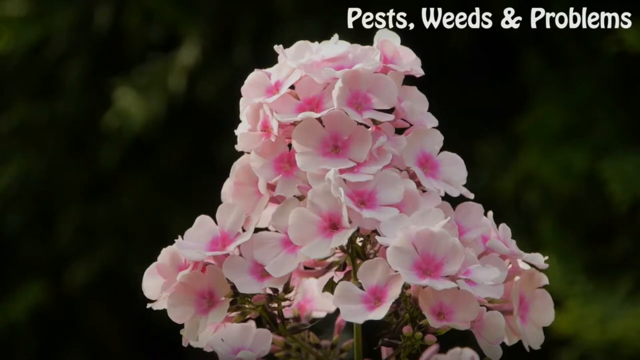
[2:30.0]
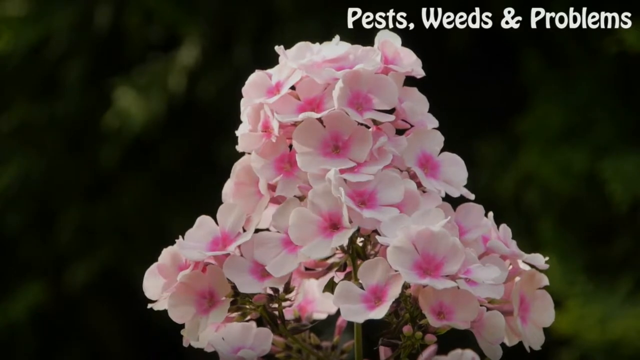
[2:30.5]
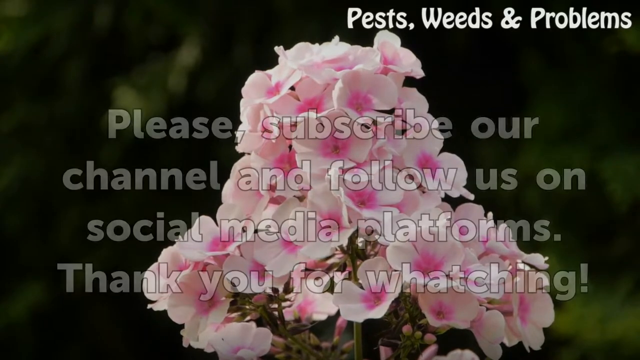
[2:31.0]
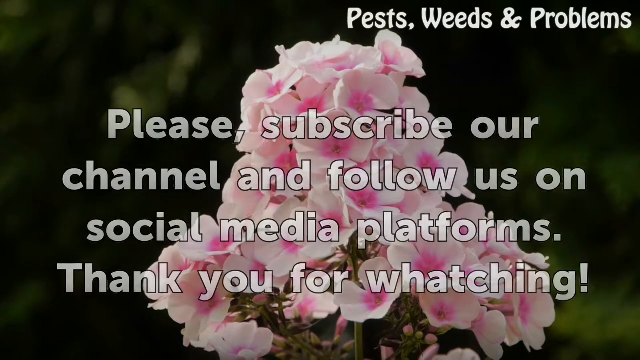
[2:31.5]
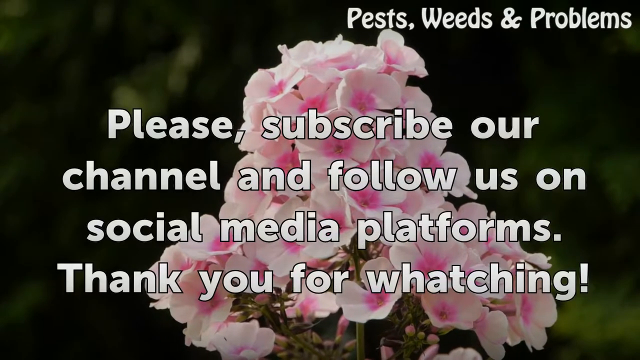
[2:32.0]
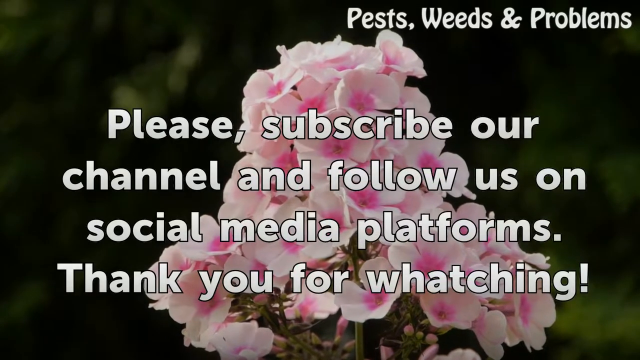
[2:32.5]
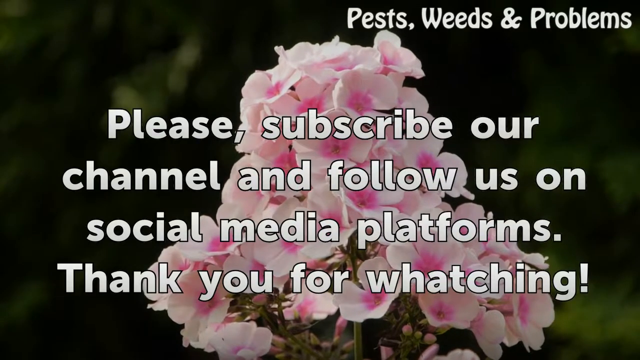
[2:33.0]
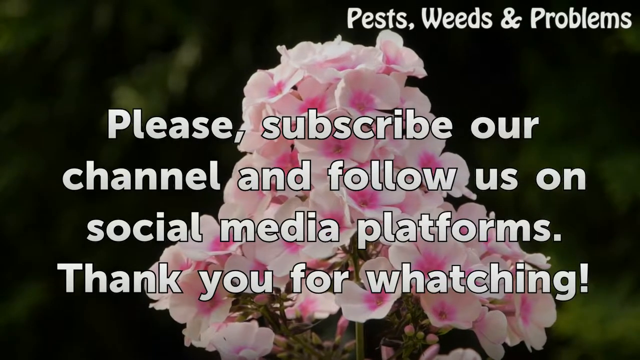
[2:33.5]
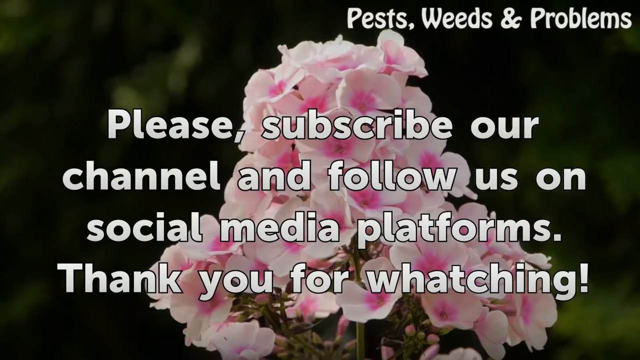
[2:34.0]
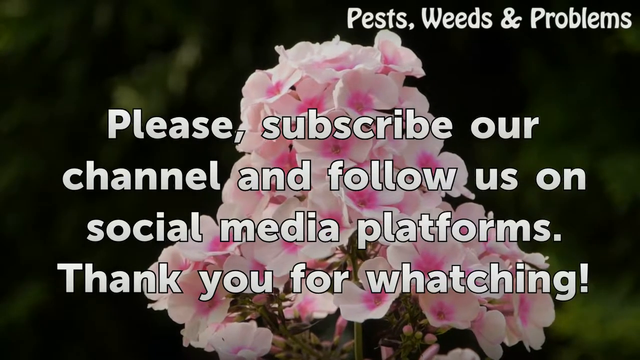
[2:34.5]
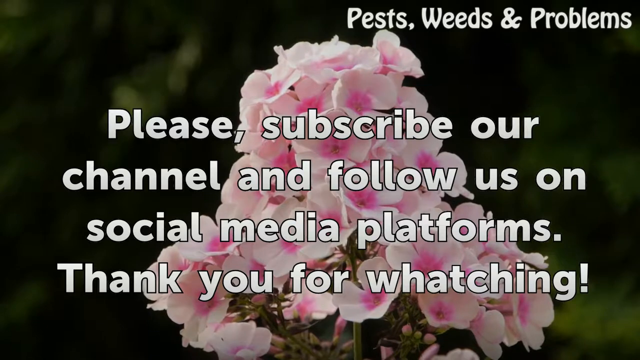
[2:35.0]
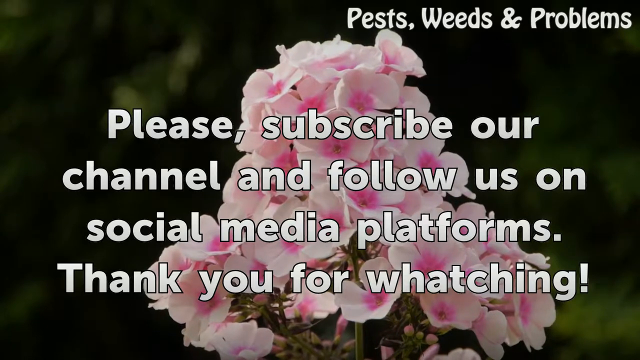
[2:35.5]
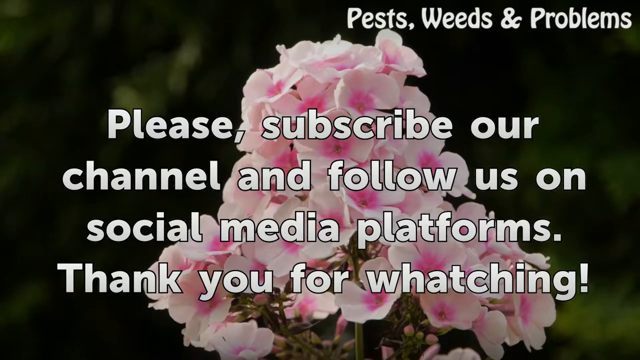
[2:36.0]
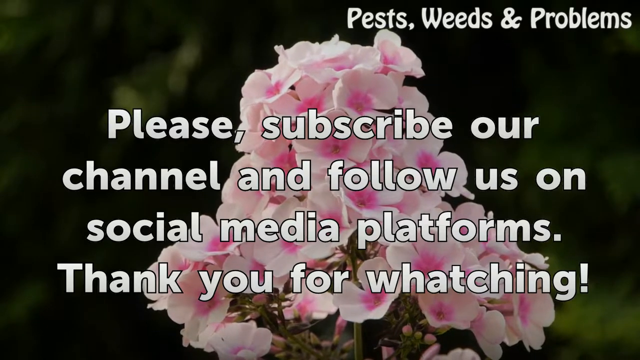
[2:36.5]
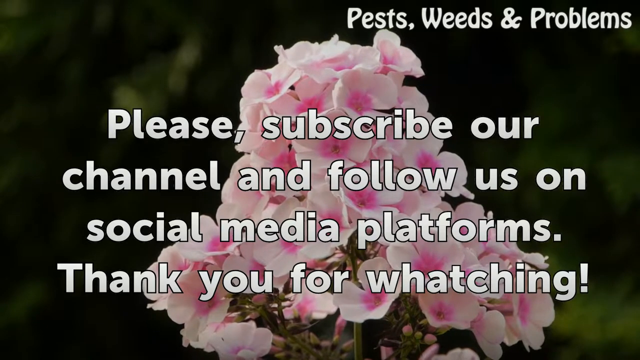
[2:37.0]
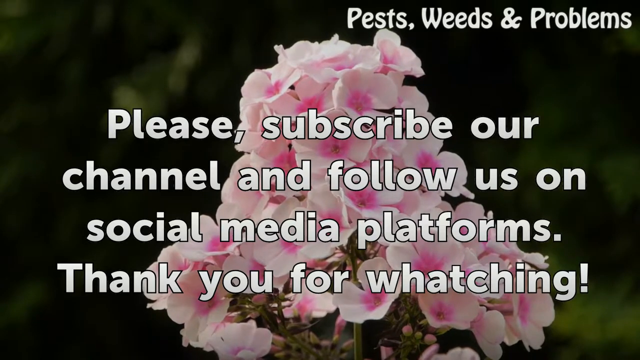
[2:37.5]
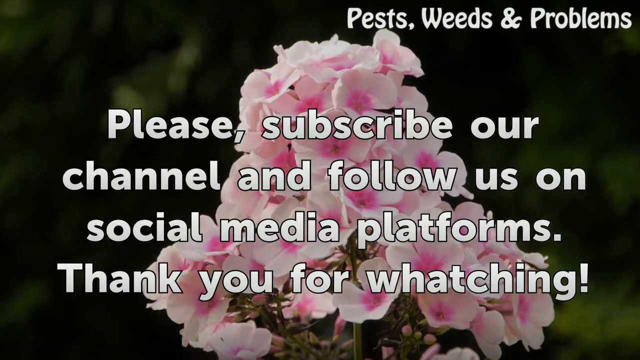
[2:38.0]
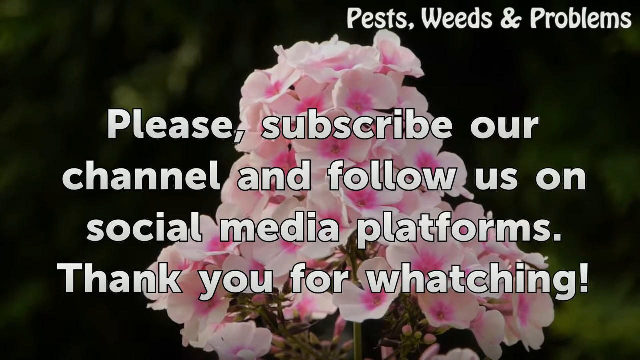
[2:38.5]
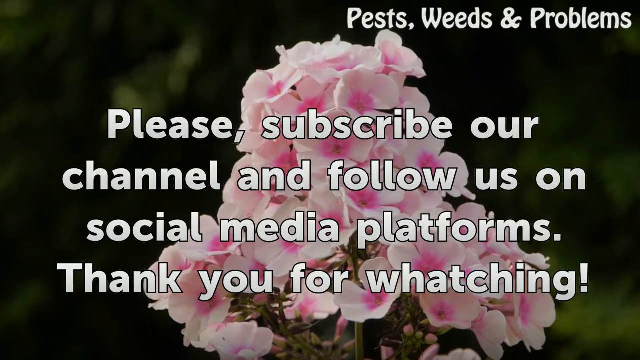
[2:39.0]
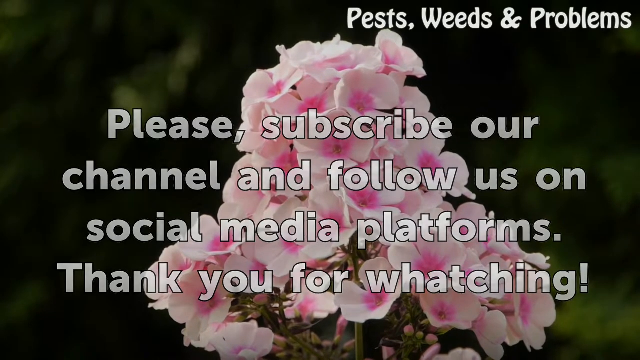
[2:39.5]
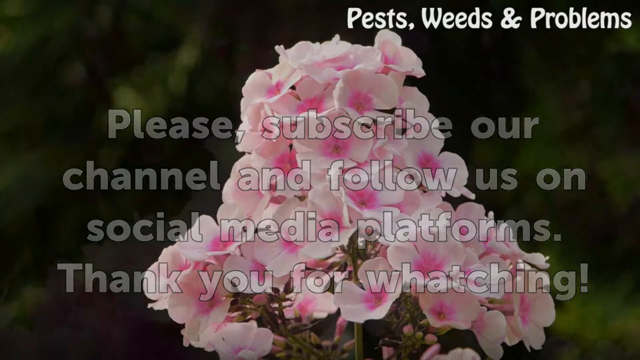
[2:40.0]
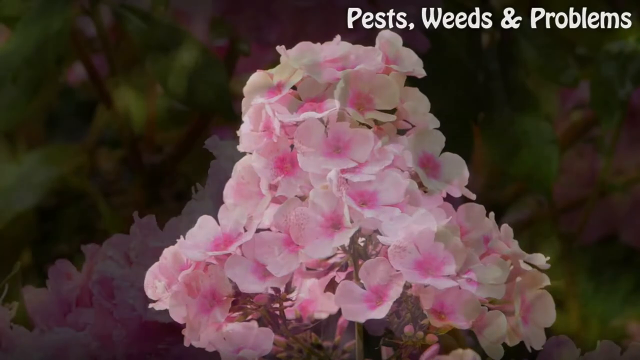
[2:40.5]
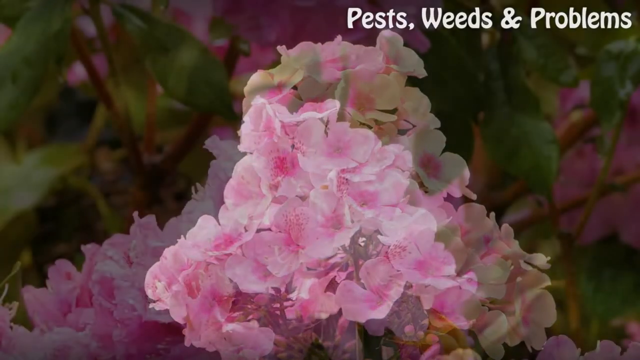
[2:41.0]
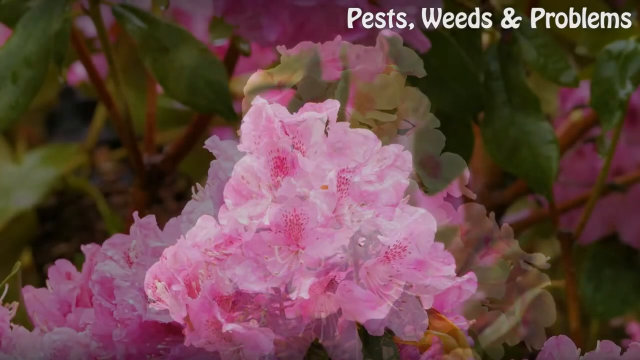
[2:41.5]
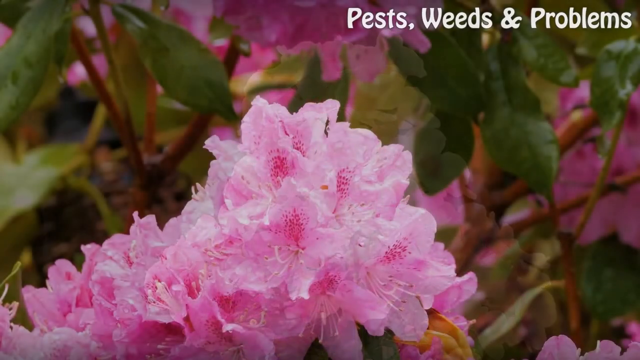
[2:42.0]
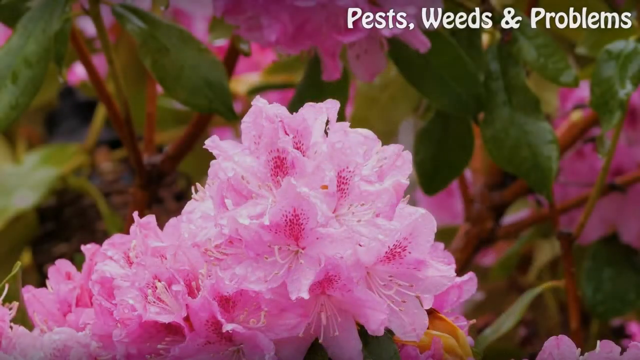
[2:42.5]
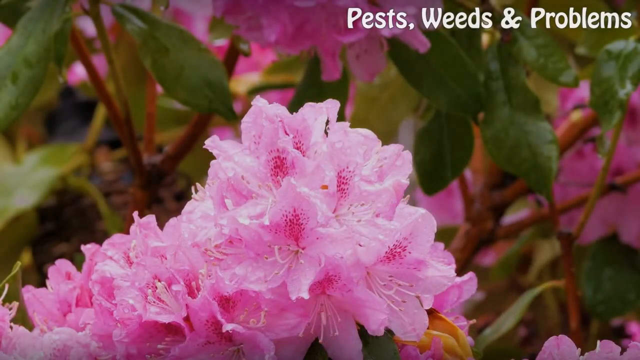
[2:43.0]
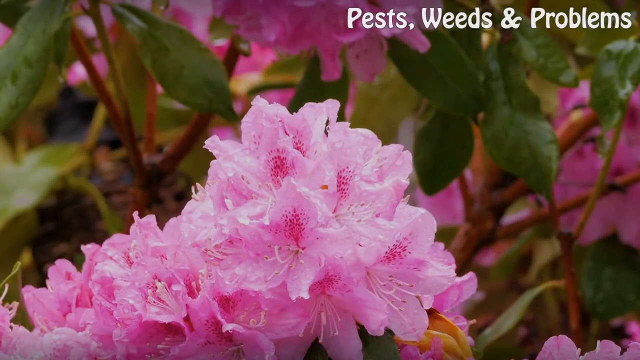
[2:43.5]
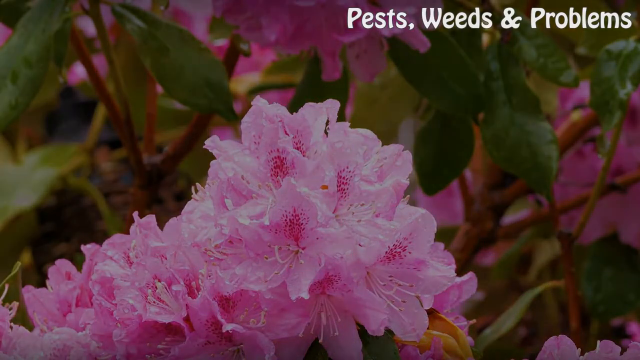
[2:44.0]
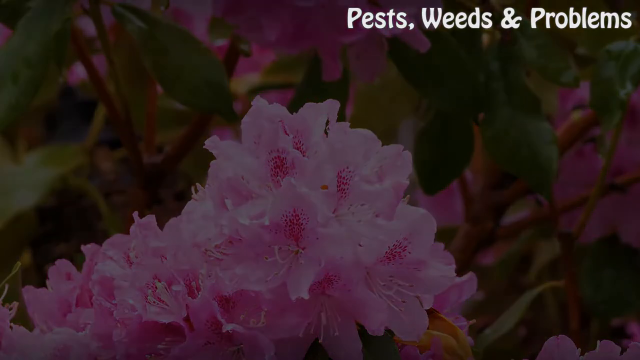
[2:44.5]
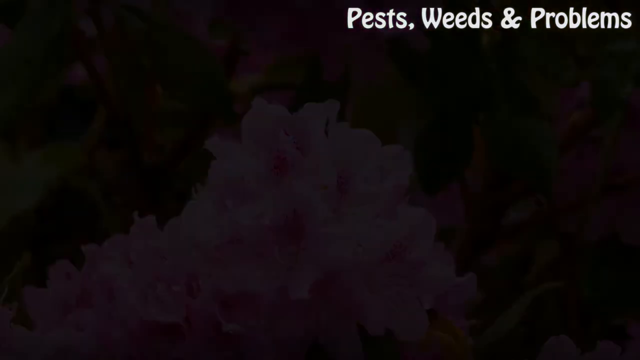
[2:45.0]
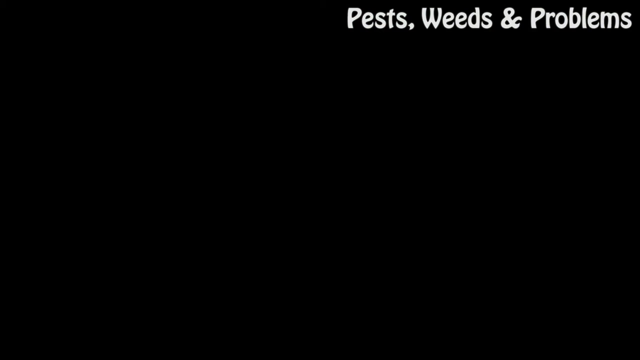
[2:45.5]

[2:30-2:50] The background is black and slightly green and very fuzzy. White lettering at the top right reads "Pests, Weeds, and Problems." In the center is a white-petaled flower with a purple middle on some green stems; it has a cone-like shape, wide and round at the bottom and narrower but rounded at the top. White lettering in the center says "Please subscribe to our channel and follow us on social media platforms. Thank you for watching." Finally, the background changes one more time to reddish-brown stems and green leaves, with a number of flowers that have light purple petals, a darker dotted purple center and a bit of pinkish color. The stems inside the flowers are white, giving a combination of dark and lighter shades of pink. White lettering at the top right reads "pests, weeds, and problems."